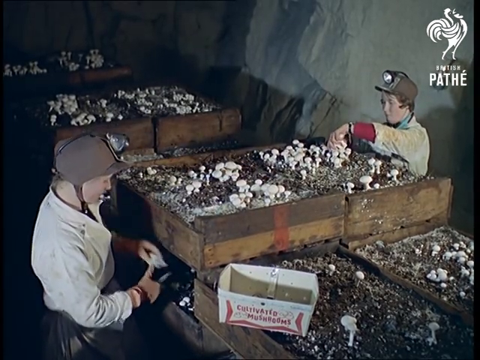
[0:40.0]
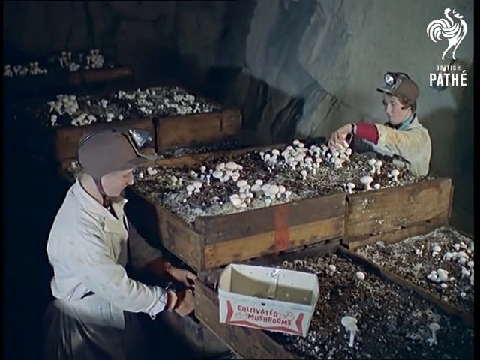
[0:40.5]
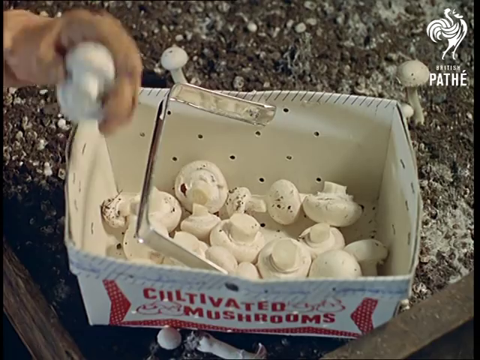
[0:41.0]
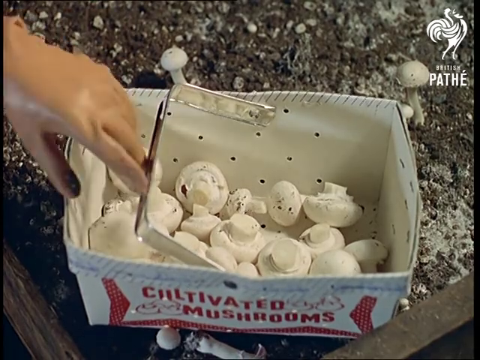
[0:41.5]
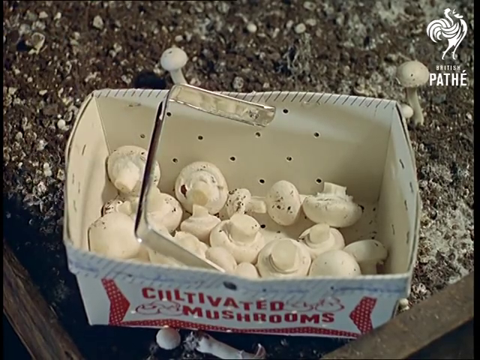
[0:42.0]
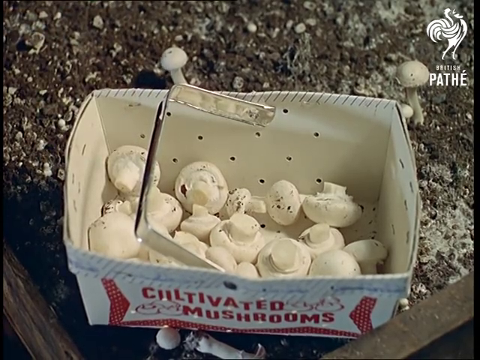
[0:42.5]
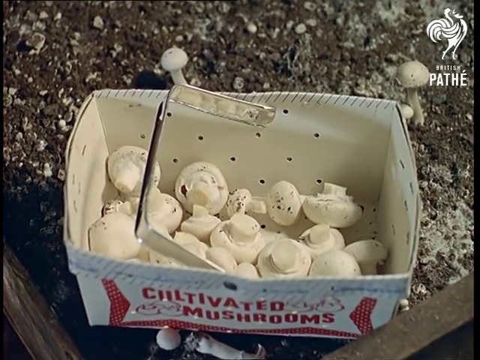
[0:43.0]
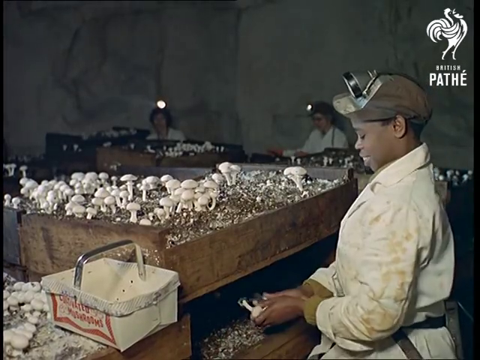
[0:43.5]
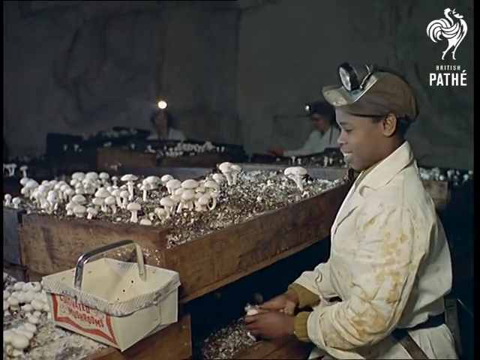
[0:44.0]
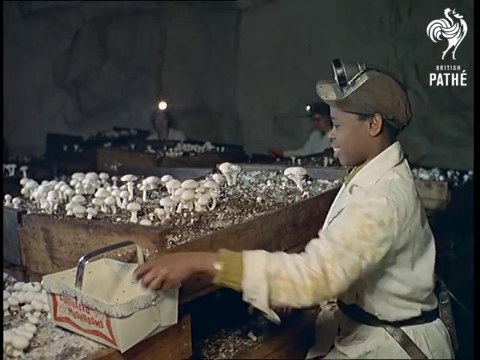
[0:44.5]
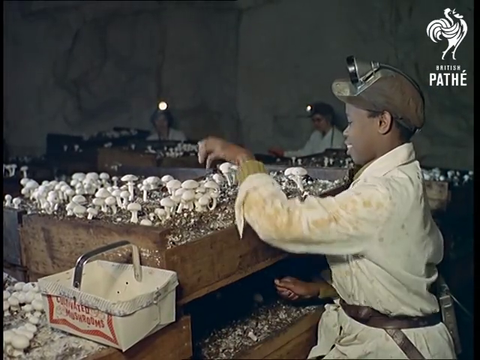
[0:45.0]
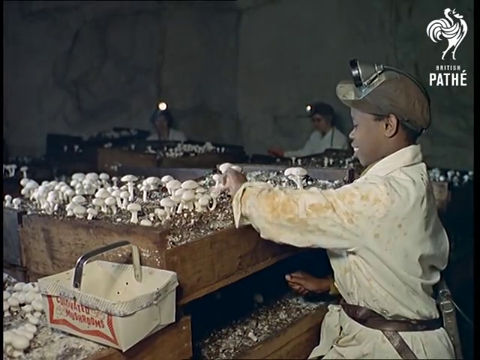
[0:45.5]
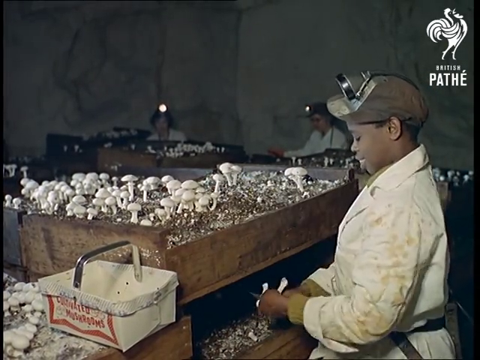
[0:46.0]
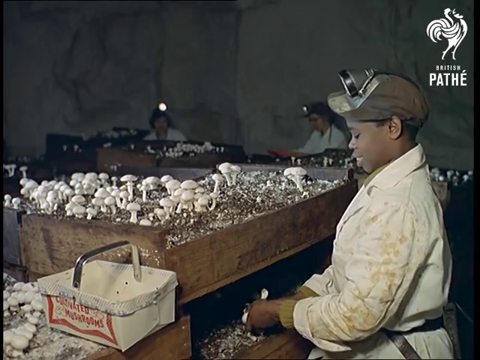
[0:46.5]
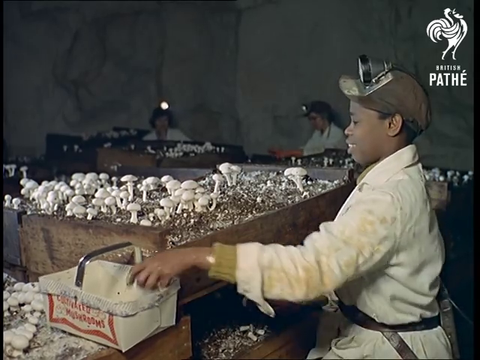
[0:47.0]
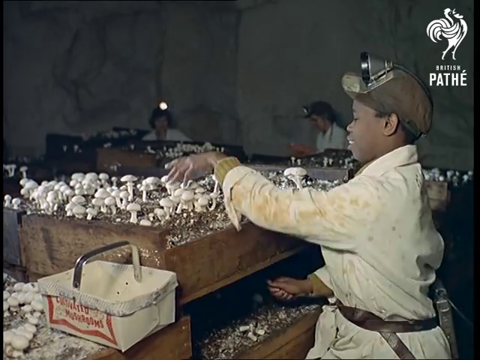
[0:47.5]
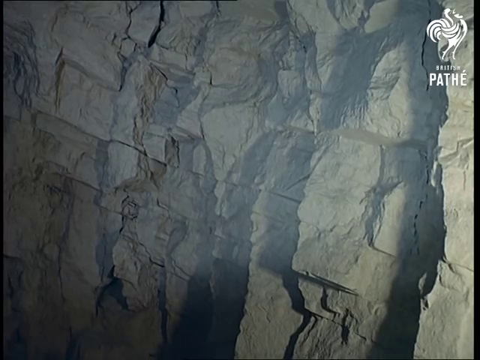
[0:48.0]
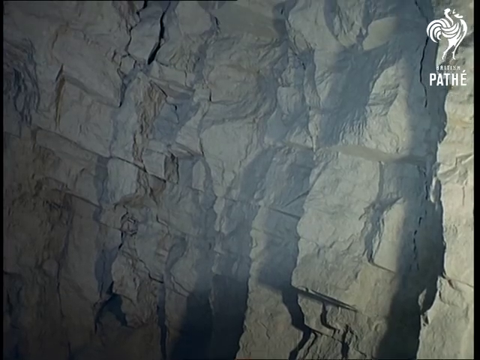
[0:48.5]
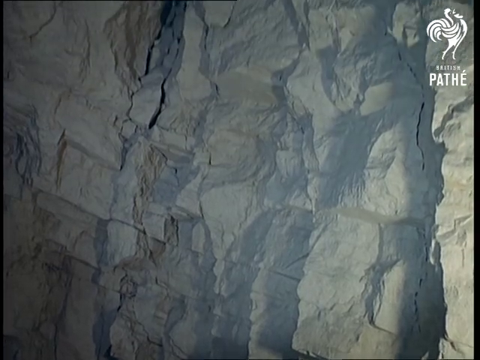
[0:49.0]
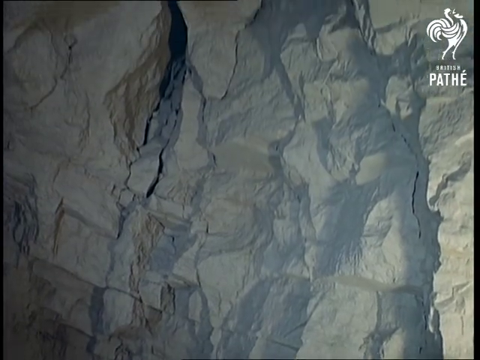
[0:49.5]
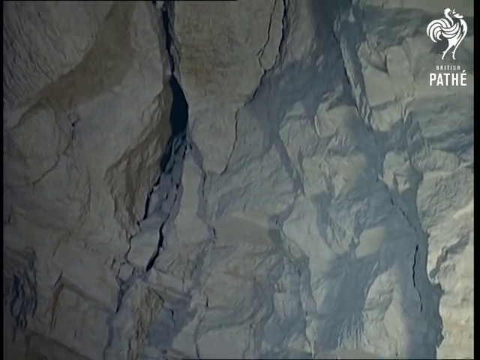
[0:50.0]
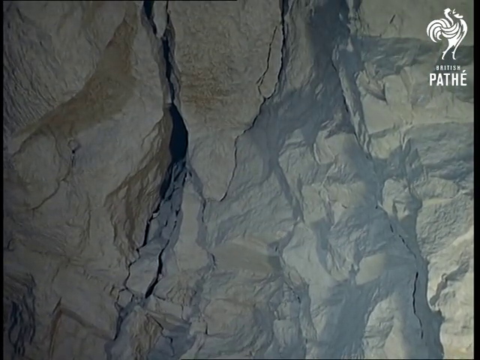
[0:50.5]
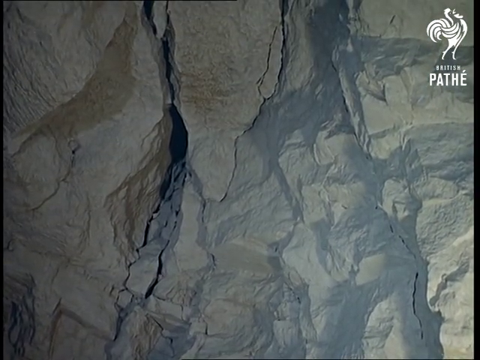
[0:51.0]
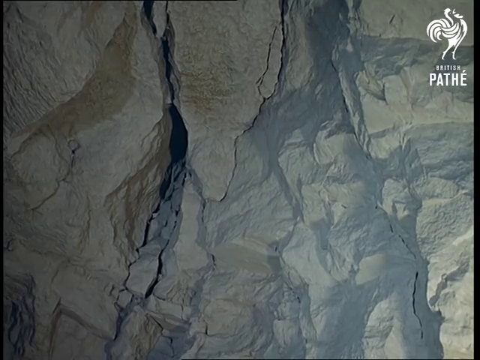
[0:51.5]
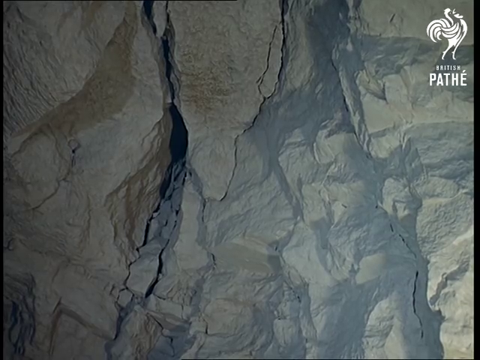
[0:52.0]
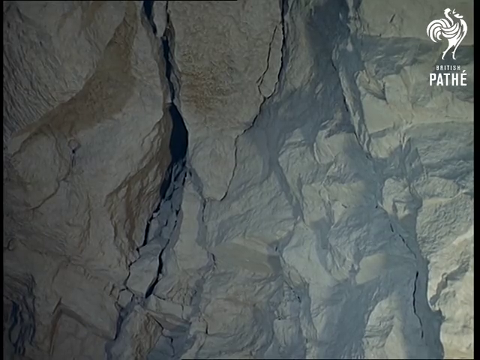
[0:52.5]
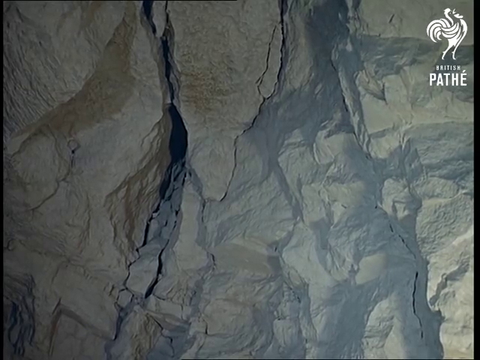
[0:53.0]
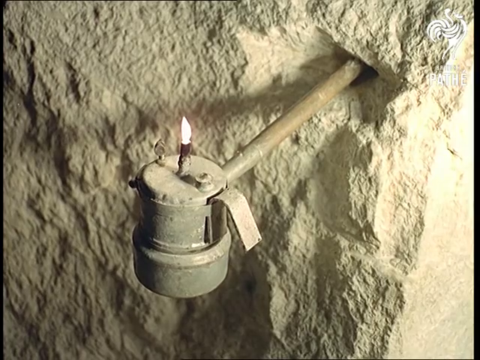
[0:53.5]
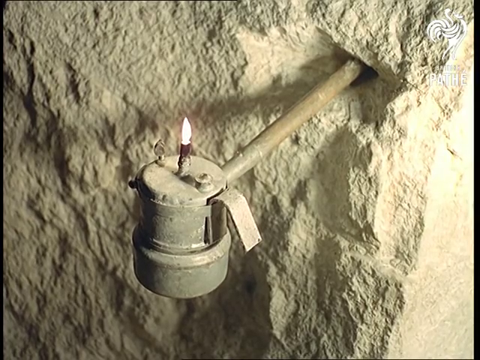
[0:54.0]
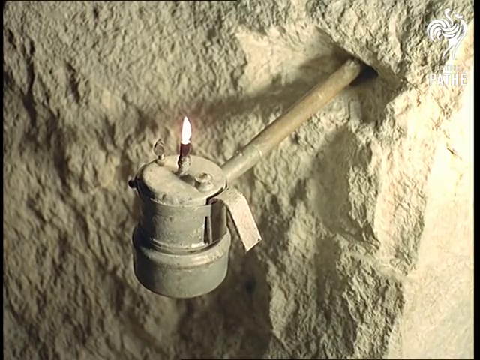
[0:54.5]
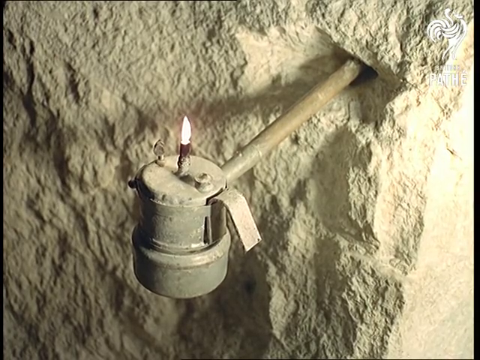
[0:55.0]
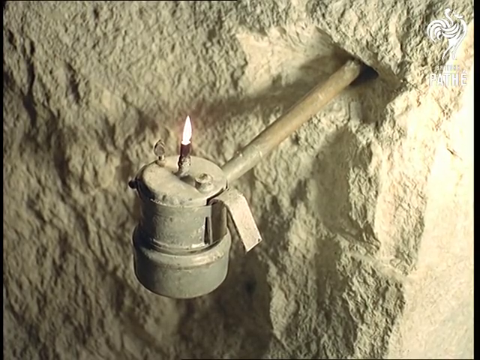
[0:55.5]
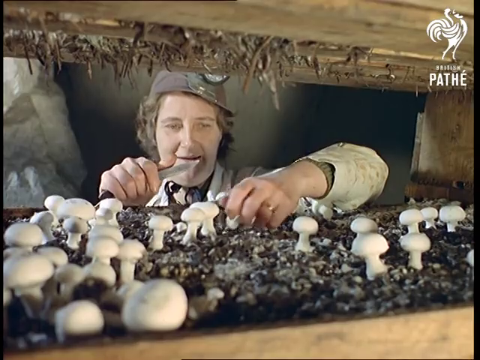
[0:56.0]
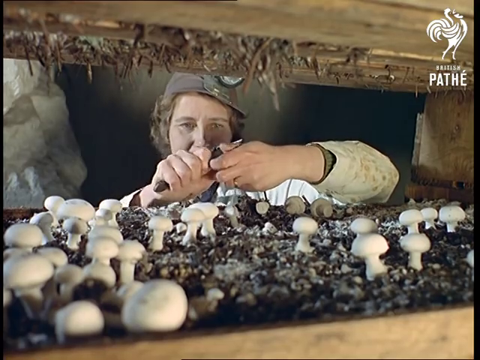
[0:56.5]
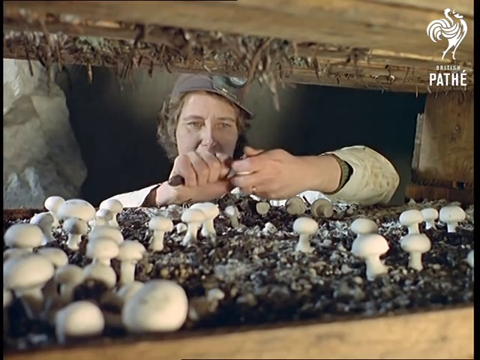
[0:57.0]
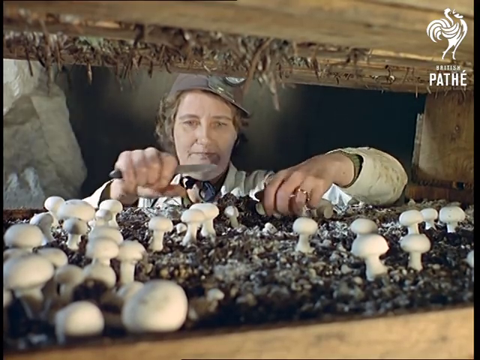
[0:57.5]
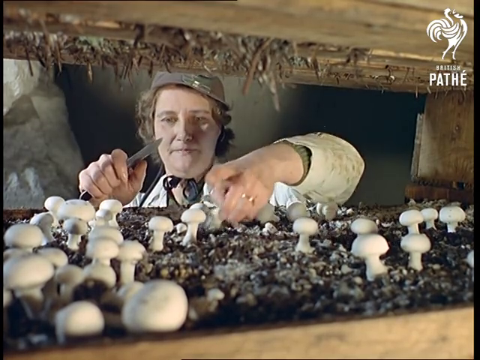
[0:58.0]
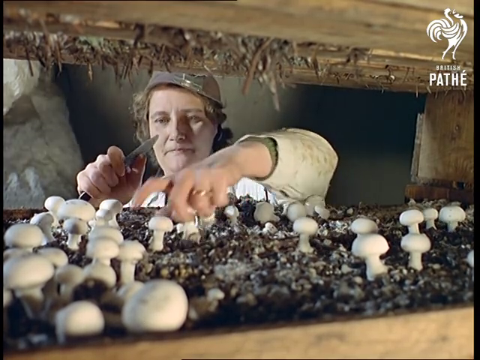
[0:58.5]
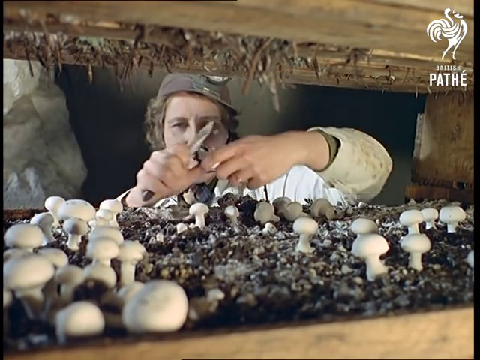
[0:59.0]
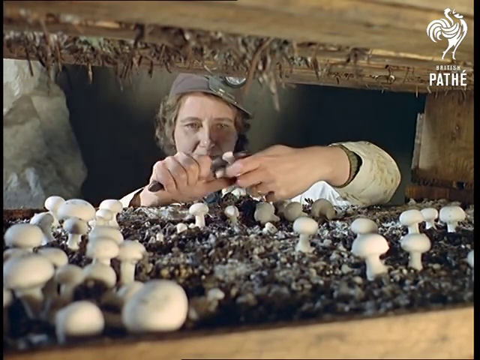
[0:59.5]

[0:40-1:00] The women continue cutting the mushrooms into a white basket with "cultivated mushrooms" written on the side. There is a bunch of mushrooms, and the women cut them very delicately, smiling at each other, with their headlamps on so they can see. The rocks of the cave are gray and cracked, and there are rocks where water apparently comes out. A metal bar sticks out of one of the rocks with a cylinder, like a candle, on its end, and it has a flame on it; its purpose is unclear.